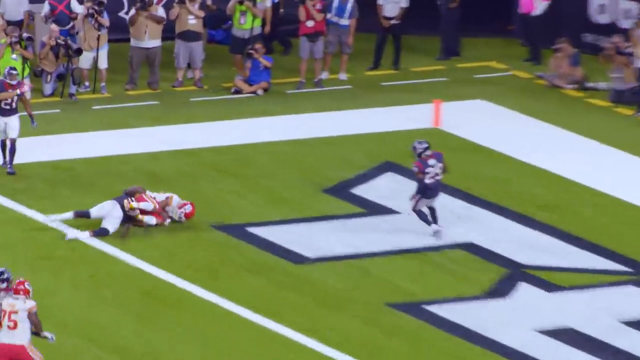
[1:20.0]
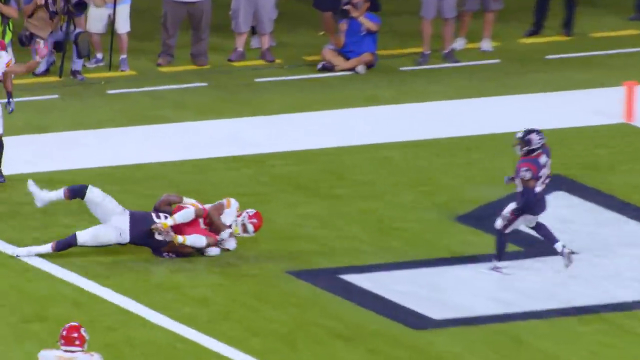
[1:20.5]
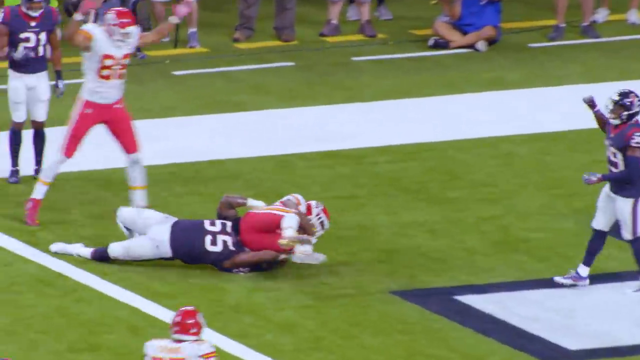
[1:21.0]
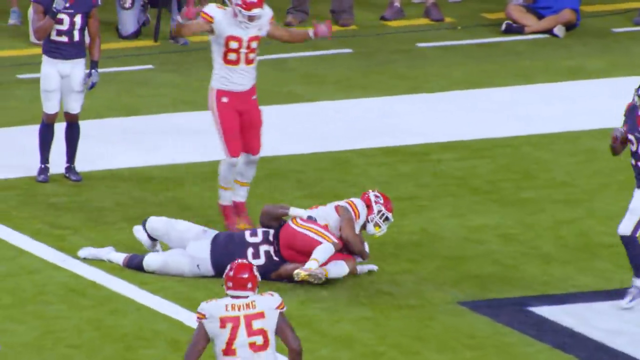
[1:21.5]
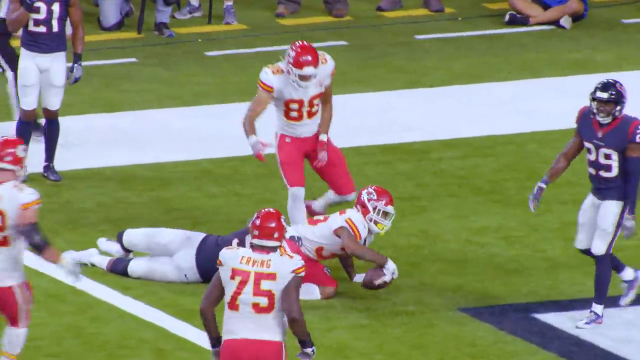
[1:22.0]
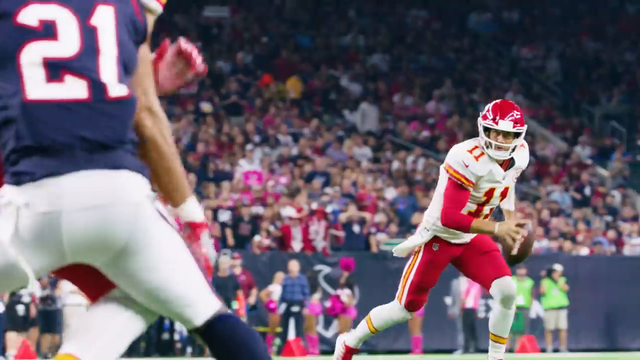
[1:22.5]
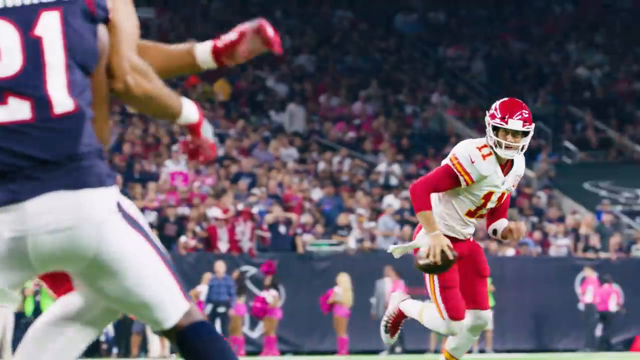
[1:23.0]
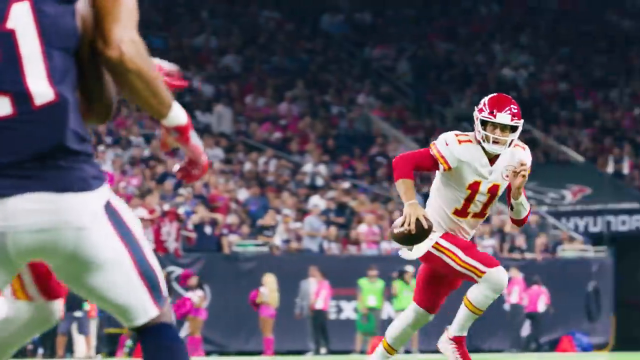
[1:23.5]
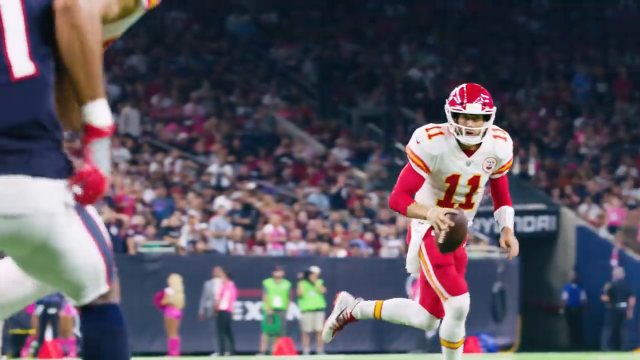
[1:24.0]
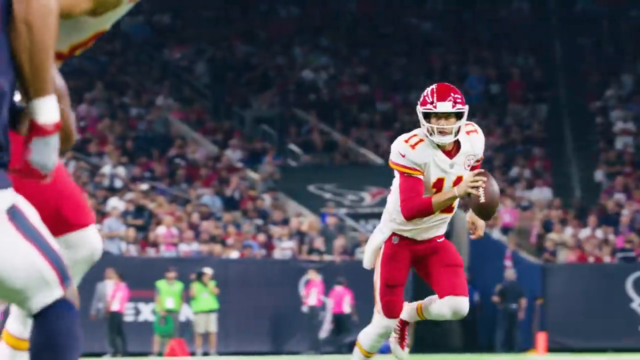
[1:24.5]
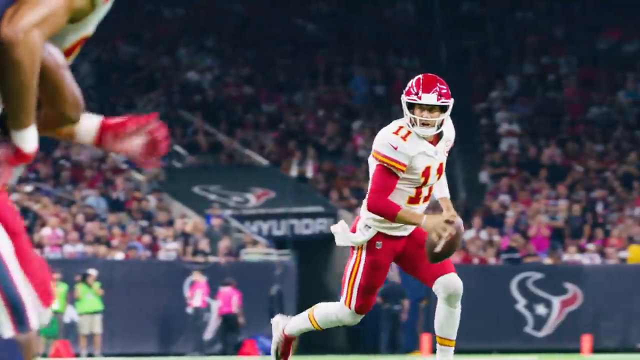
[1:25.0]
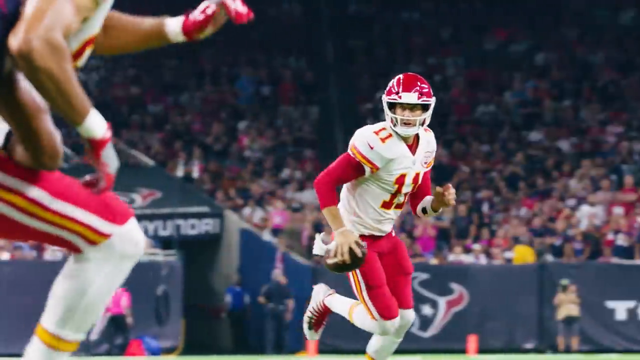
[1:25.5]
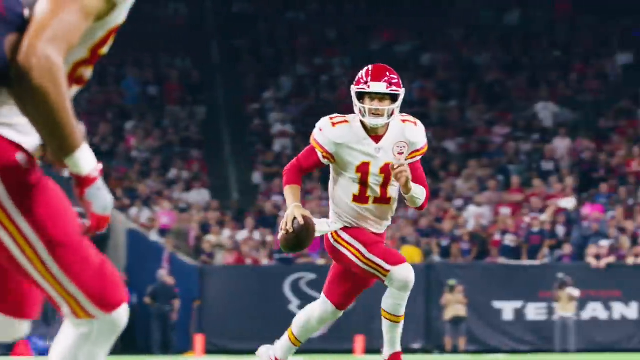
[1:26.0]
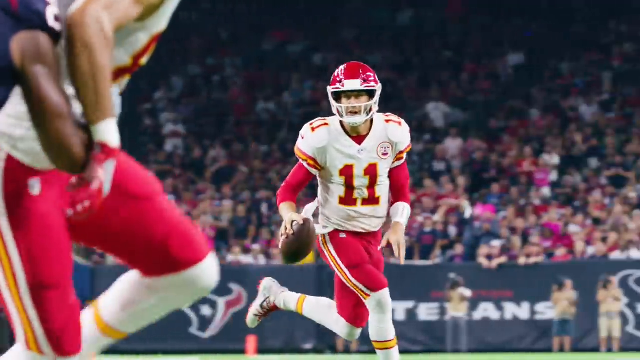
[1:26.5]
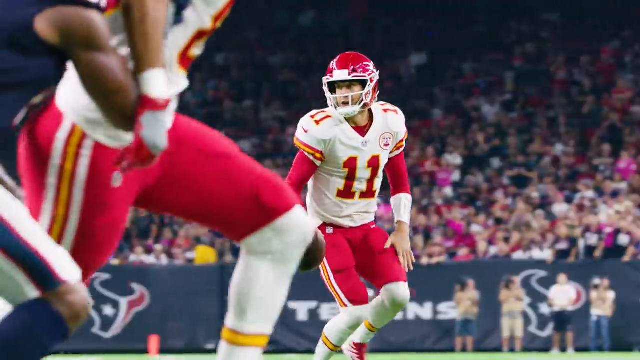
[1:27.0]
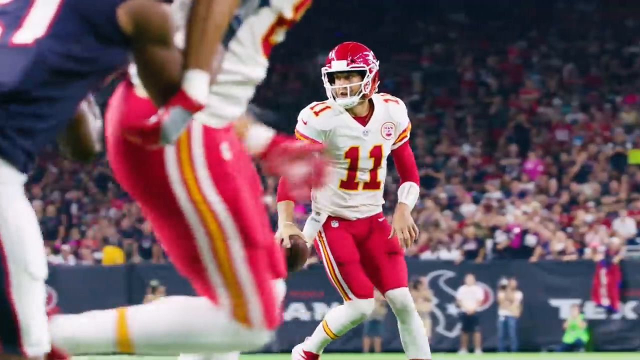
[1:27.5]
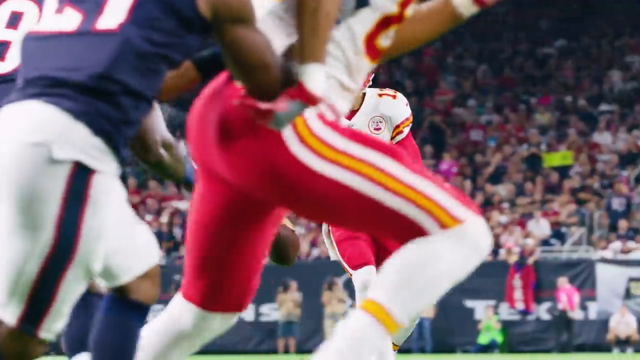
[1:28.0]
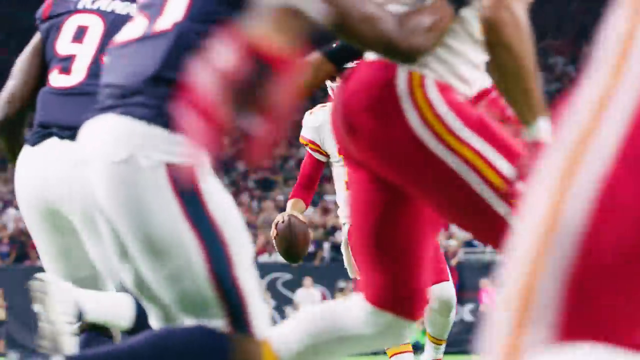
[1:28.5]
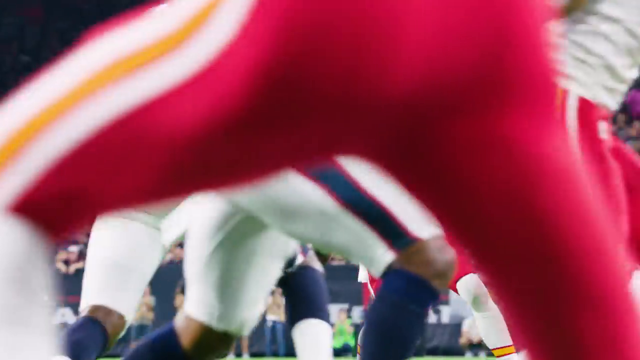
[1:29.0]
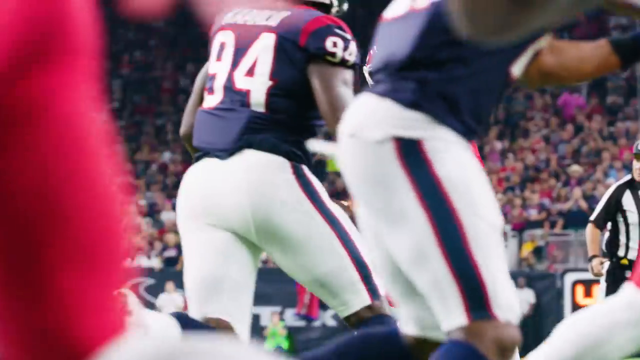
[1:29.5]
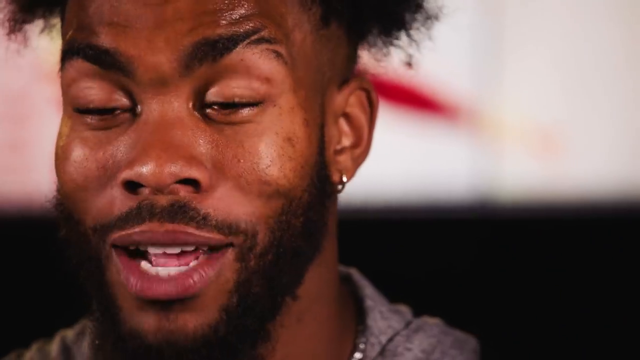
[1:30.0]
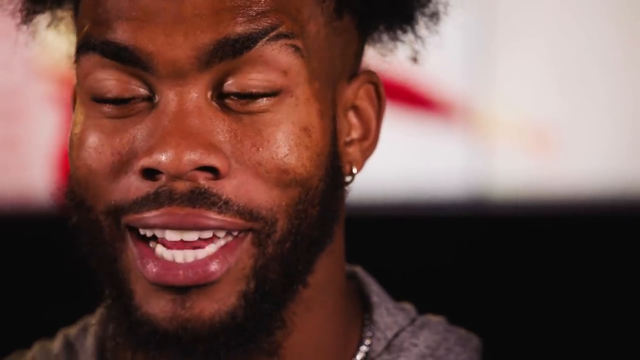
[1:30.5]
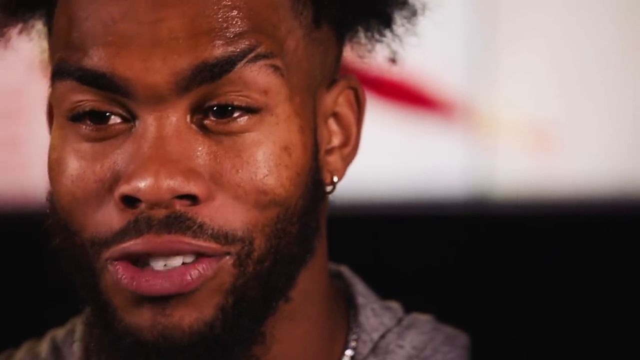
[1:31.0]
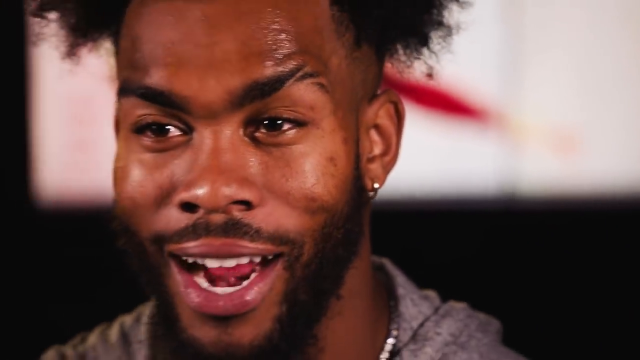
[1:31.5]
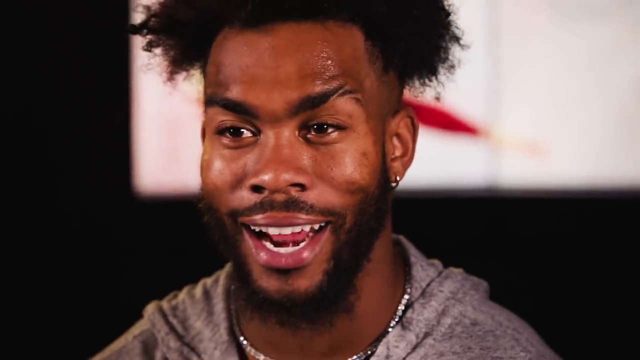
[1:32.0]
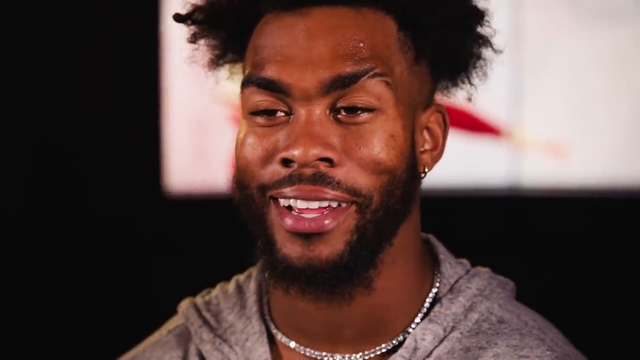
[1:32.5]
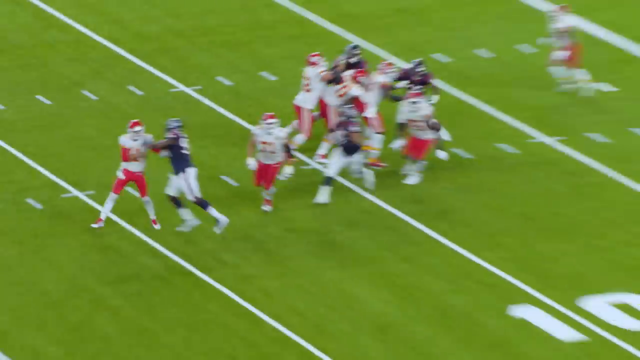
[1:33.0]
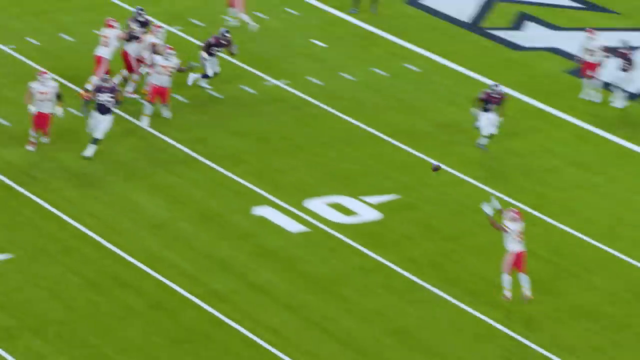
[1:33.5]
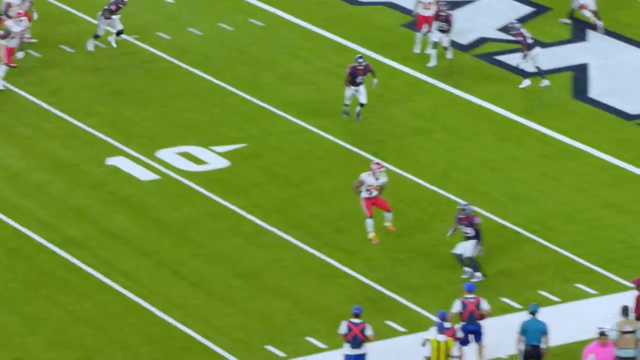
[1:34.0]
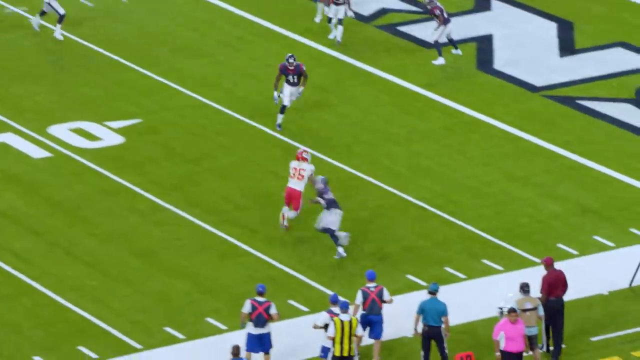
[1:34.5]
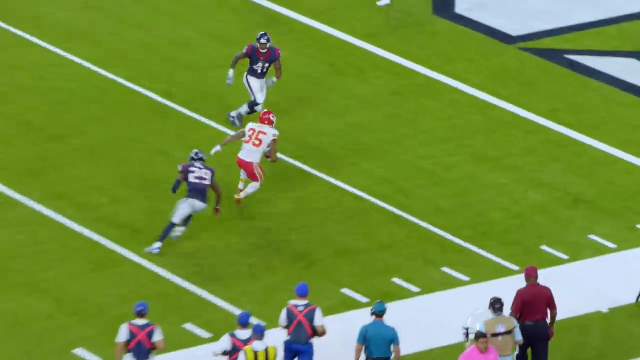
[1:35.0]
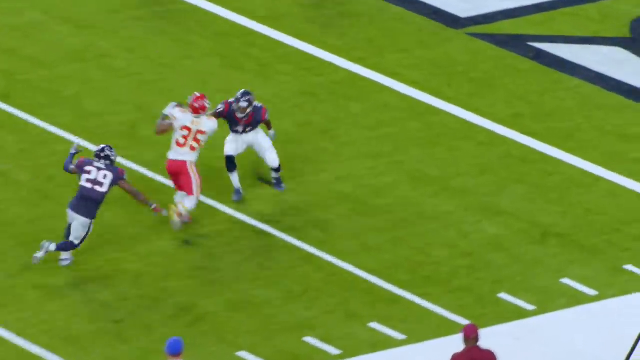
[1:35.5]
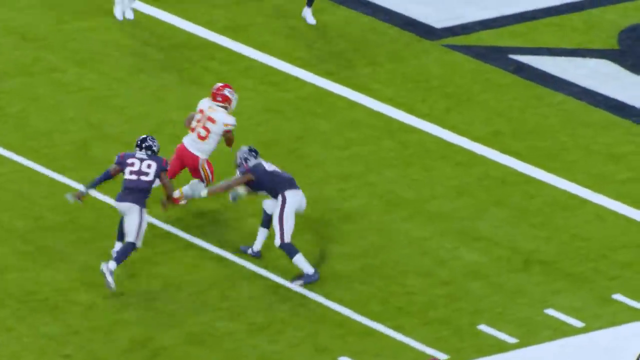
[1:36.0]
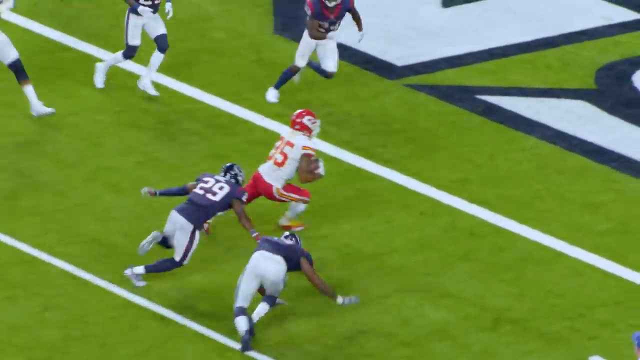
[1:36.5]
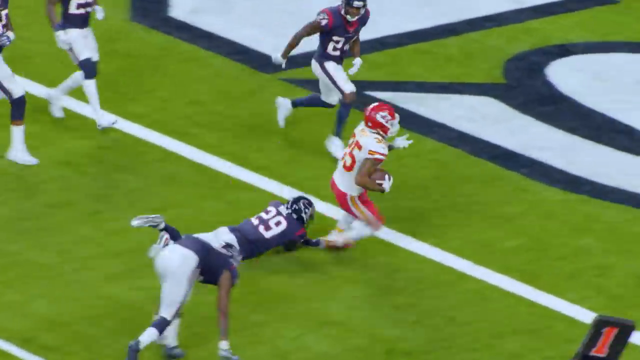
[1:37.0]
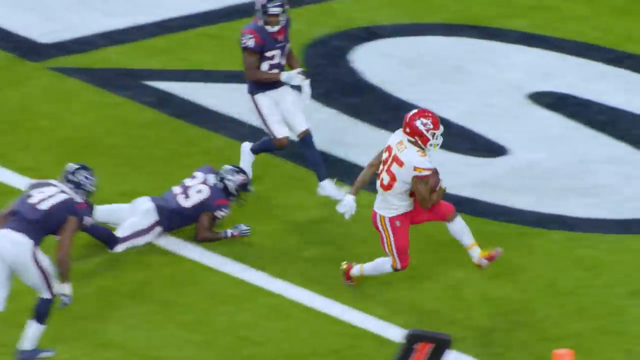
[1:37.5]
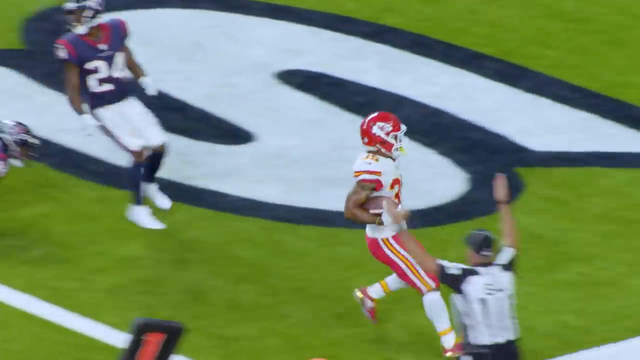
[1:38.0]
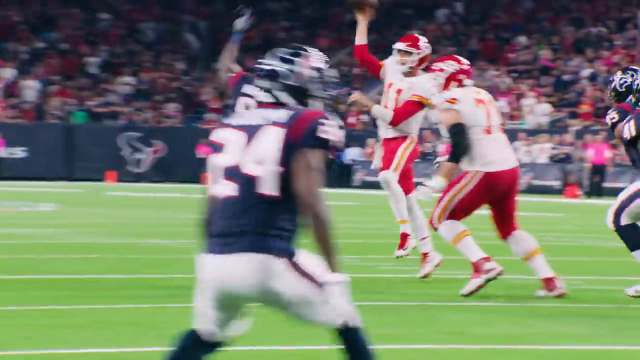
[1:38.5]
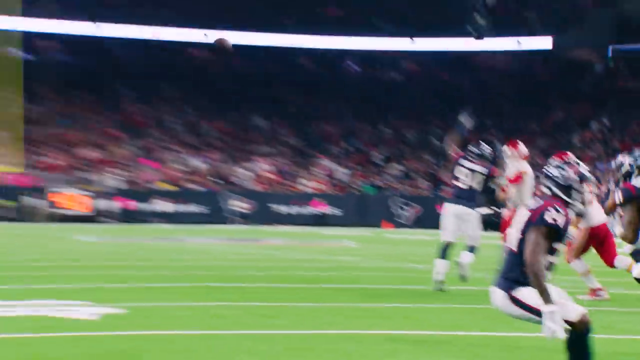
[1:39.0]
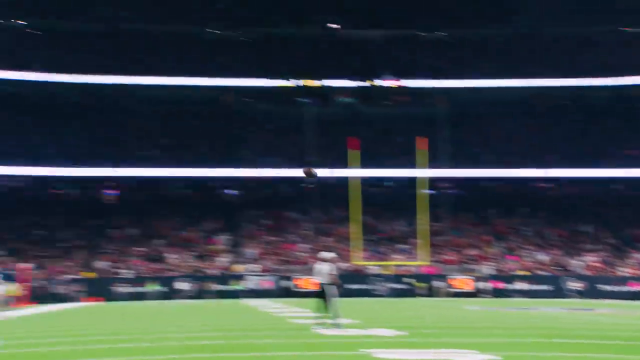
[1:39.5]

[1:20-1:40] The scene opens on the quarterback, who wears number 11, with his teammates after the touchdown catch. A replay of his actions follows. The video then cuts back to Chicandric West, with a blurred background behind him on the left-hand side; he is the main focus and looks quite happy, smiling as he speaks. Separate clips show activity presumably from the same game: the touchdown is caught right on the edge of the area, maybe a couple of yards in from the touchdown line. Just over the line, a blue-shirted individual tackles the receiver as he catches, another blue-shirted individual is off to their left and another ahead of them to the right, all of whom fail to stop the touchdown.